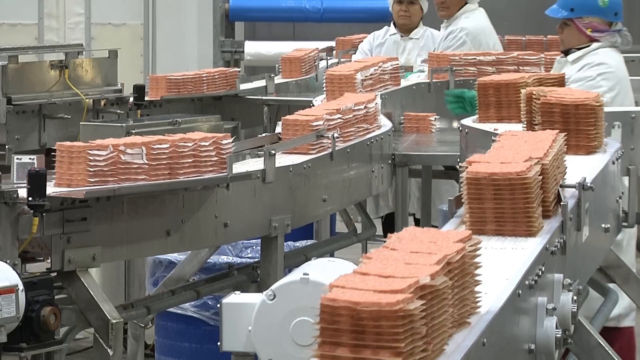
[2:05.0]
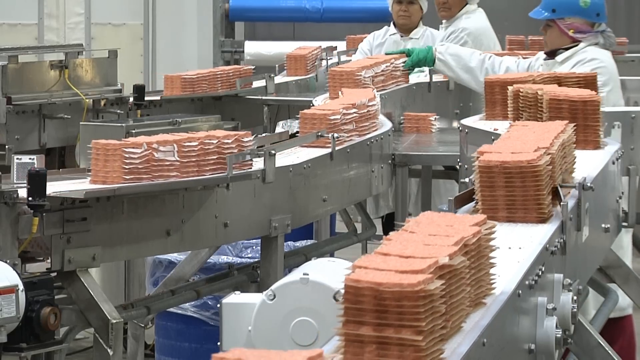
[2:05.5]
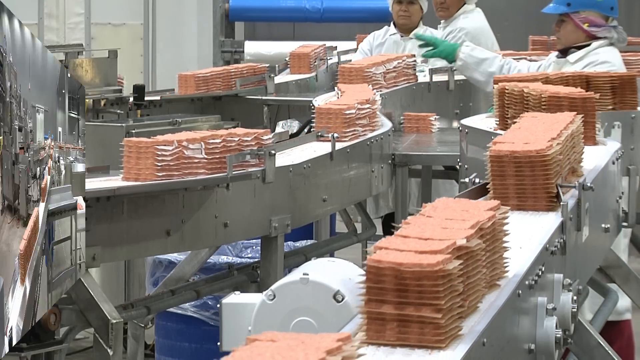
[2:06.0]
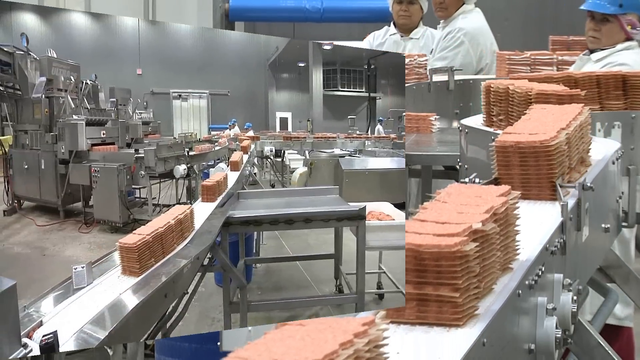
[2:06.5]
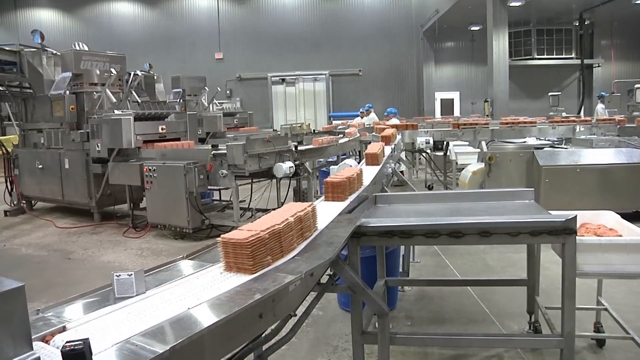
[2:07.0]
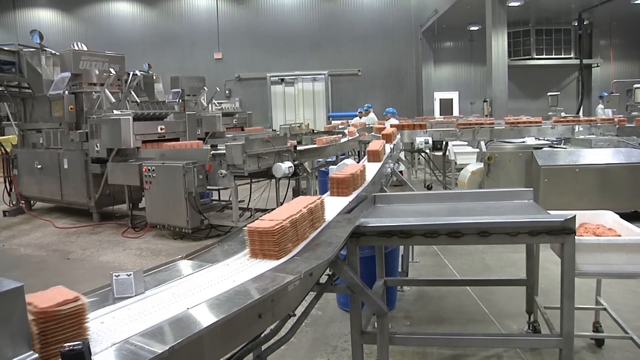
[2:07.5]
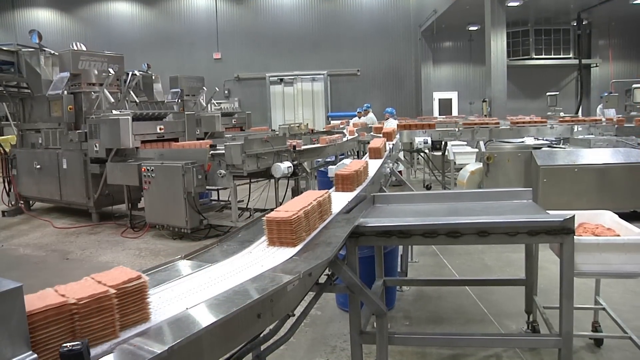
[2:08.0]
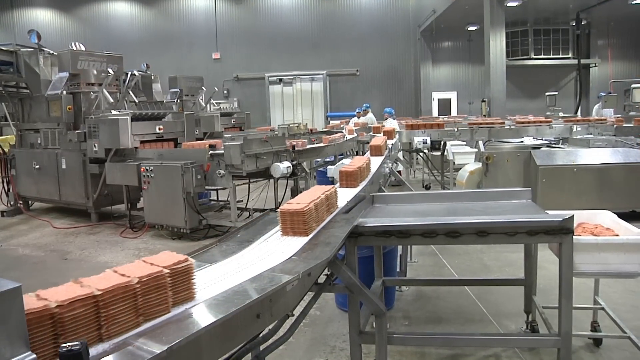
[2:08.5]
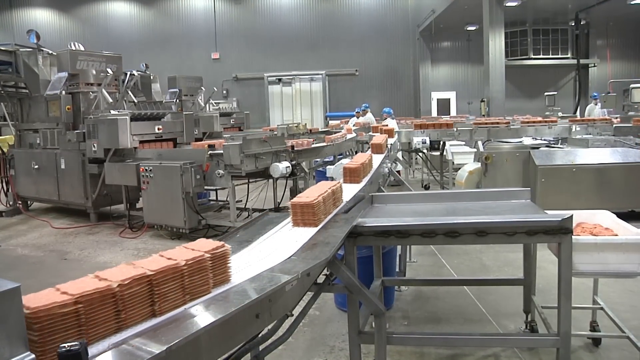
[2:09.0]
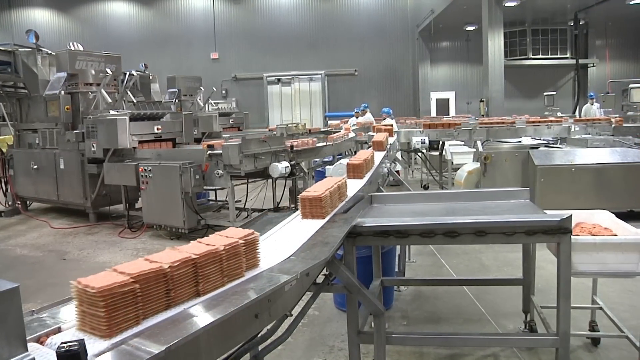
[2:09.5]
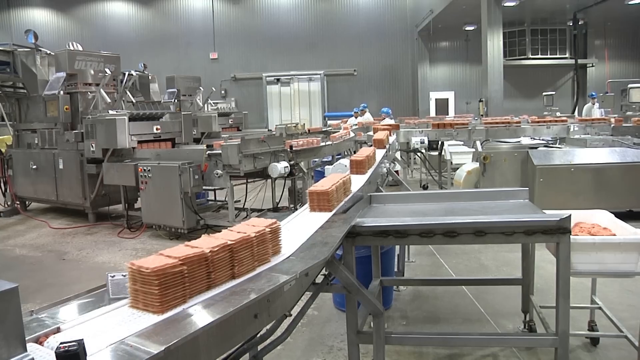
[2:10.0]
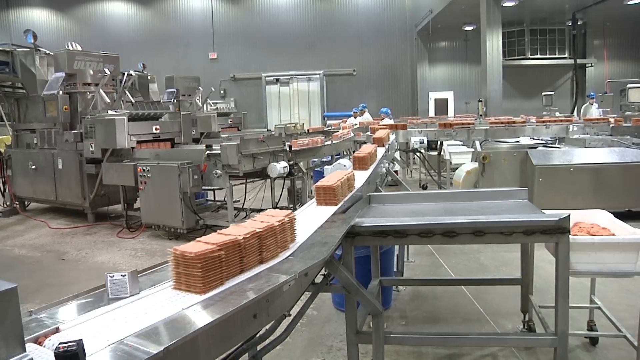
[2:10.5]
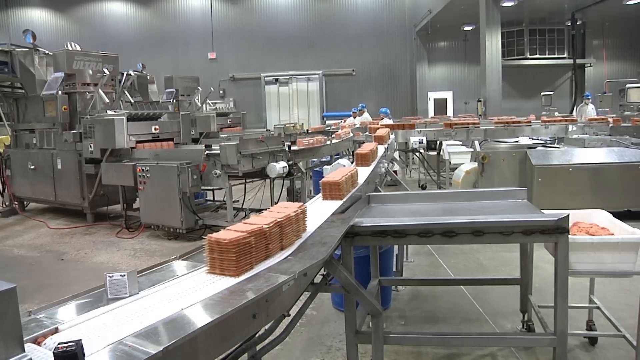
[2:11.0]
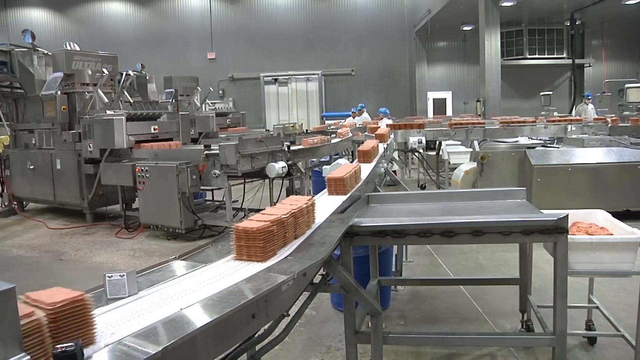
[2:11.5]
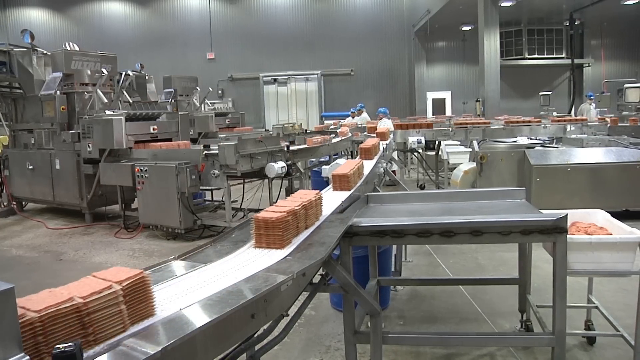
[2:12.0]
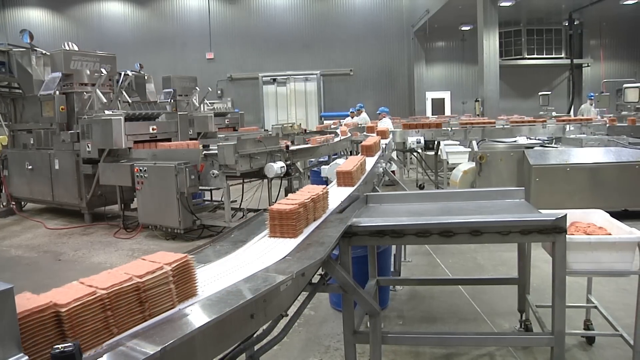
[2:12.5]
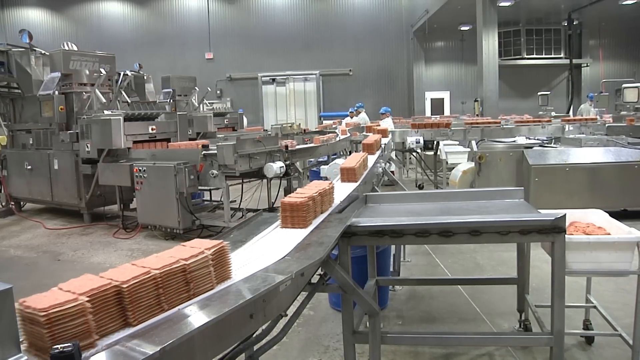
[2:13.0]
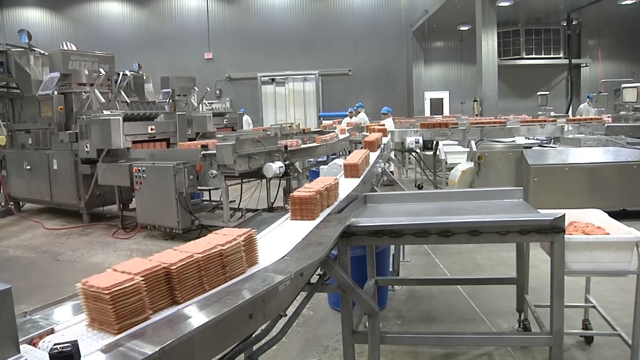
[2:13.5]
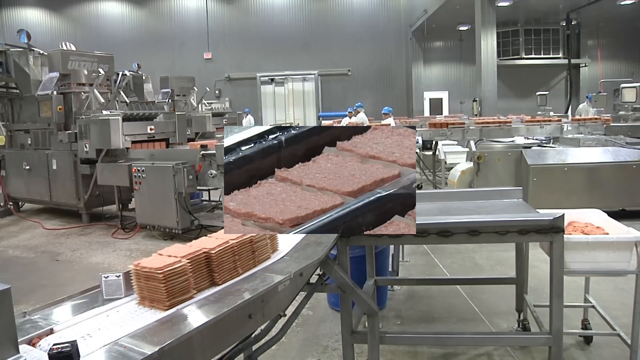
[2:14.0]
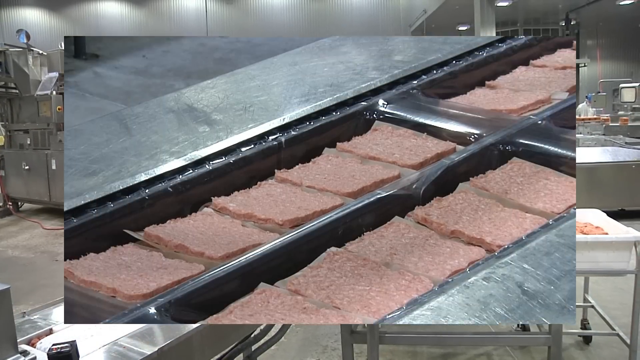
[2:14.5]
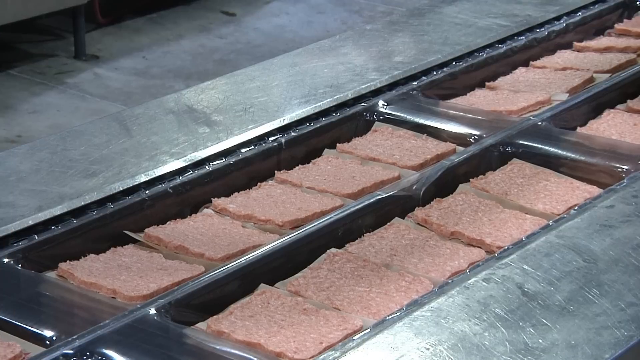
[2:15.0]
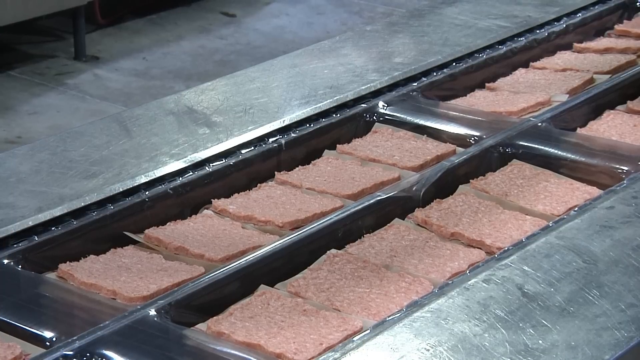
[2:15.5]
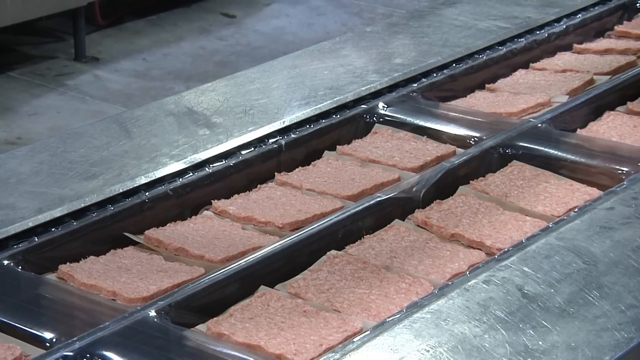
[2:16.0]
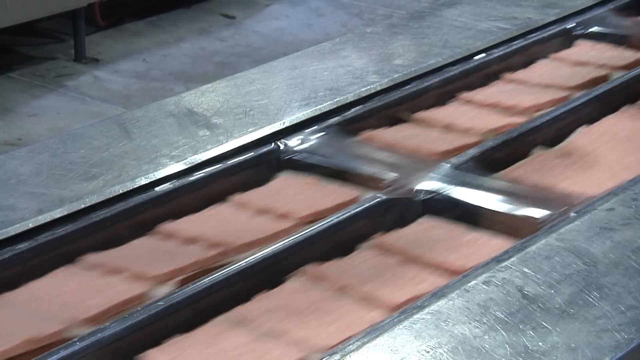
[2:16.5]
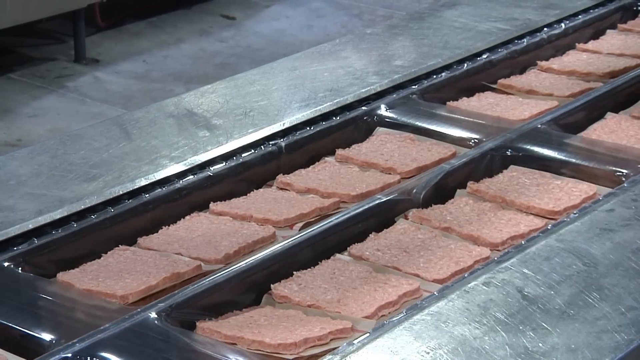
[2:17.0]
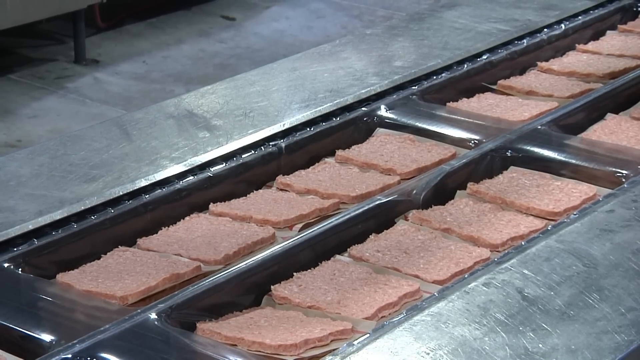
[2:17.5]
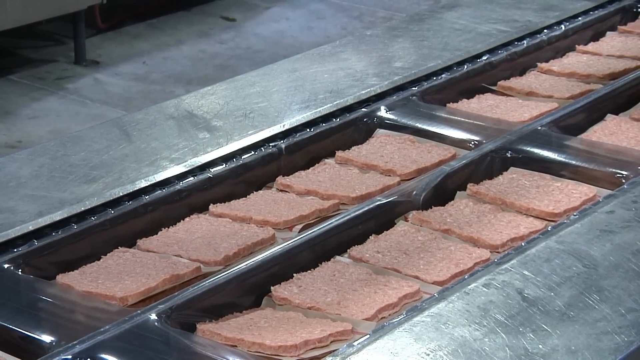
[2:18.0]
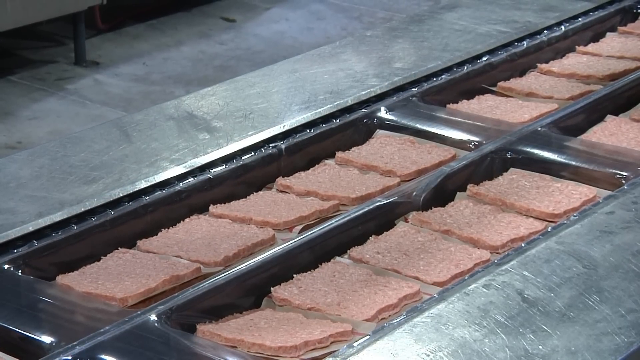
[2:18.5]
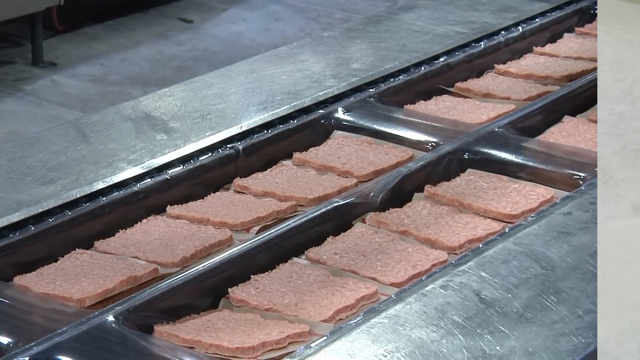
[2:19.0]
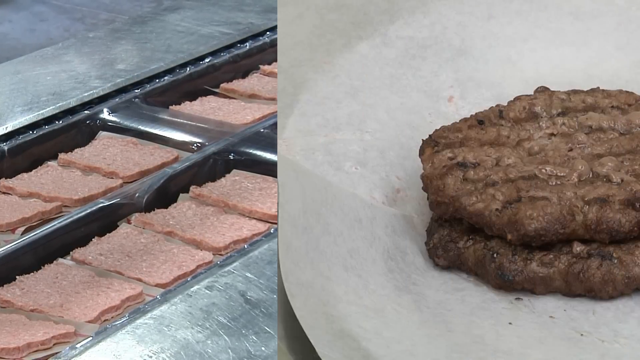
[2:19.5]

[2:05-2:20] What seems to be one of the final stages of the processing line shows people standing around visually inspecting the patties as they come by. A woman kind of touches one, apparently to check its firmness. The patties then look like they are put in packaging and sent off to another part of the plant, possibly for cooking. The setting is the warehouse floor of a plant, though the last part may be in a cafeteria where the patties are cooked.